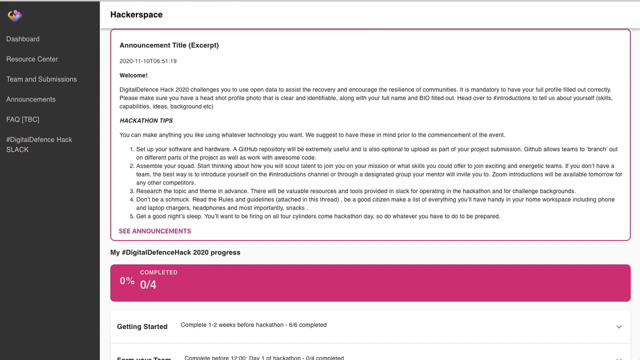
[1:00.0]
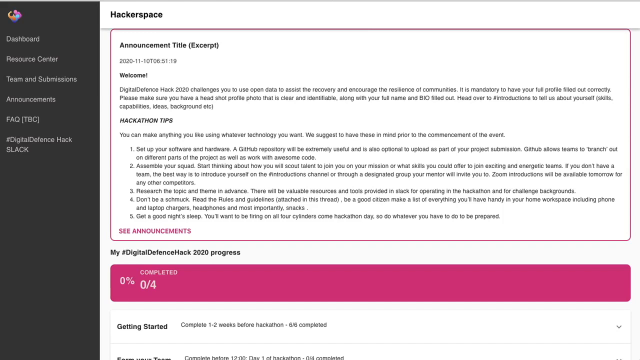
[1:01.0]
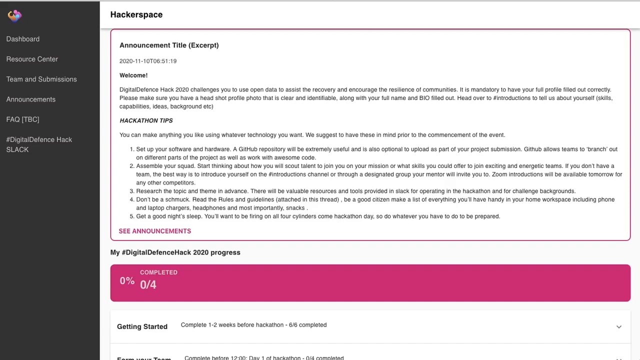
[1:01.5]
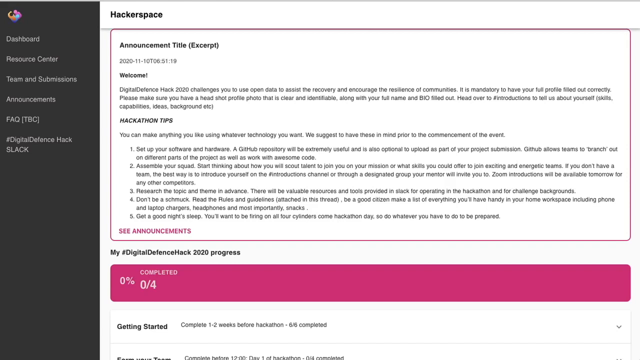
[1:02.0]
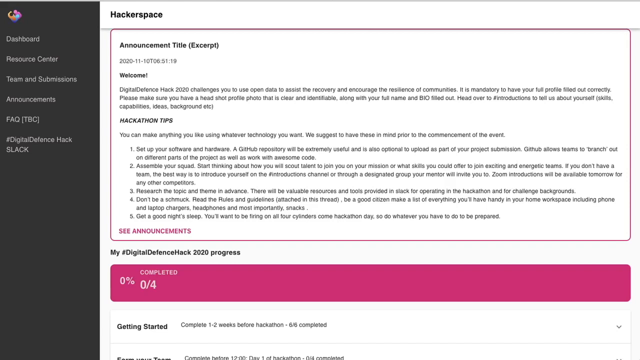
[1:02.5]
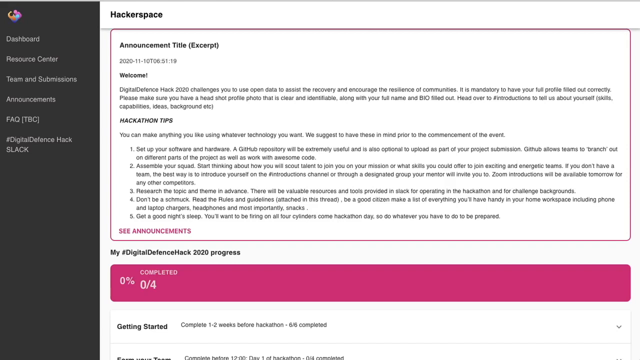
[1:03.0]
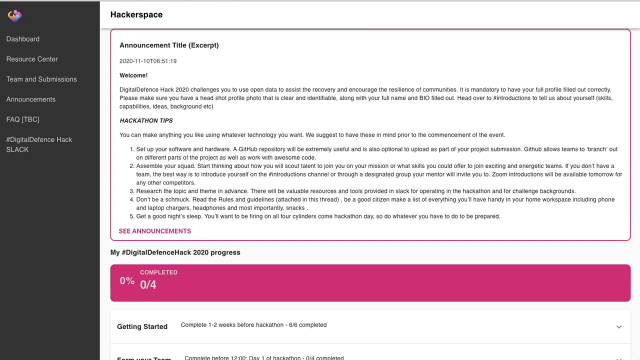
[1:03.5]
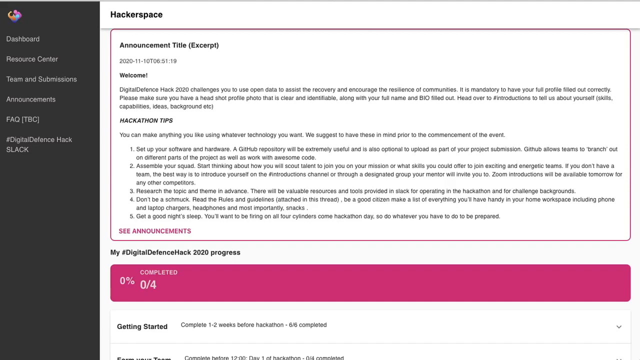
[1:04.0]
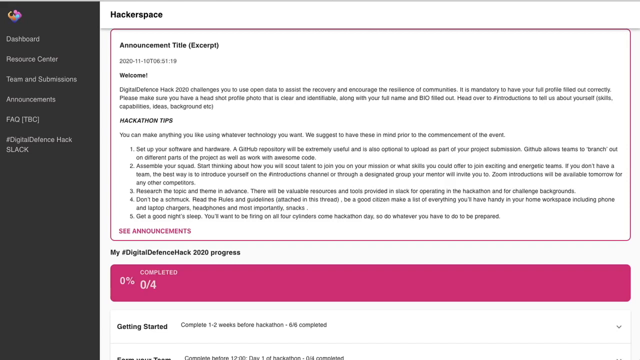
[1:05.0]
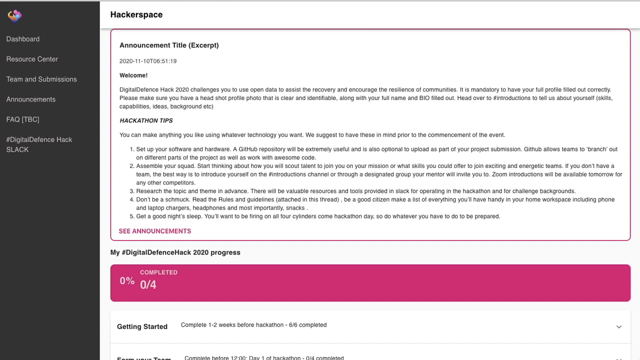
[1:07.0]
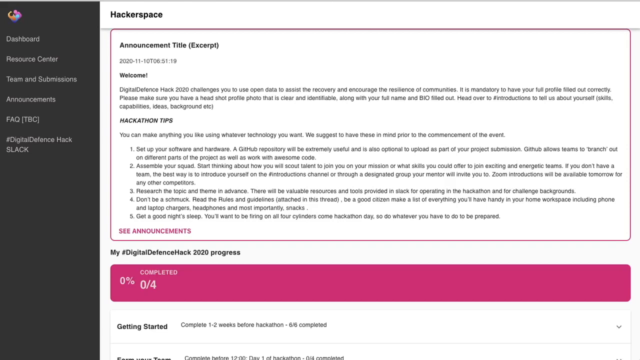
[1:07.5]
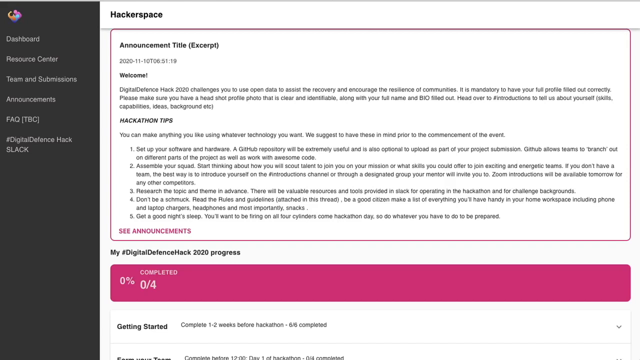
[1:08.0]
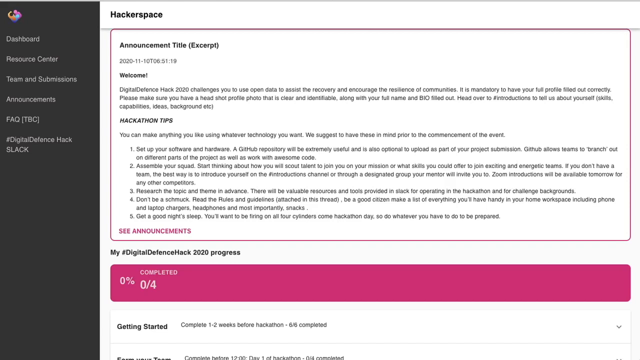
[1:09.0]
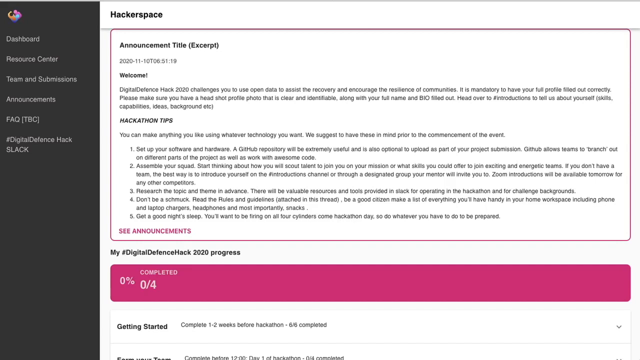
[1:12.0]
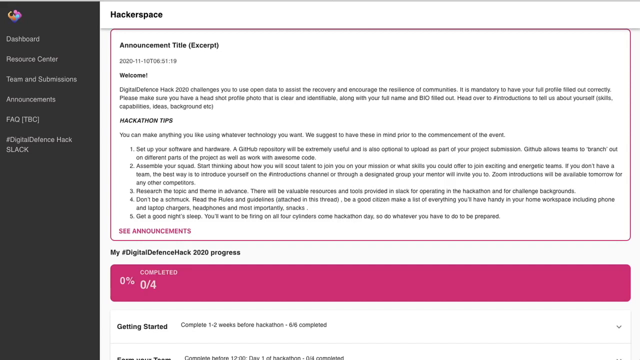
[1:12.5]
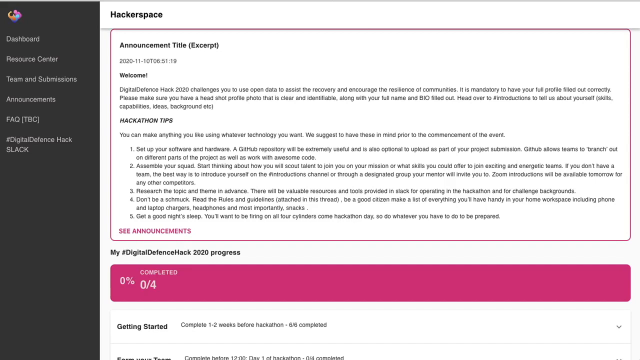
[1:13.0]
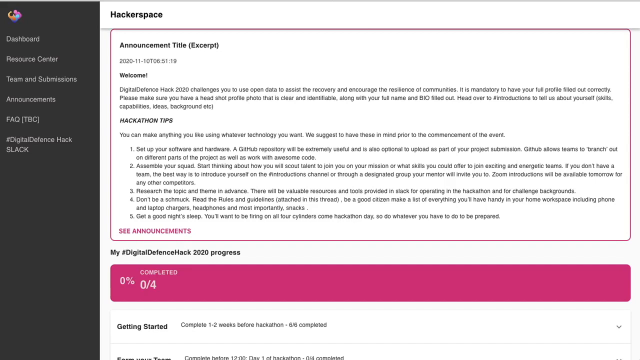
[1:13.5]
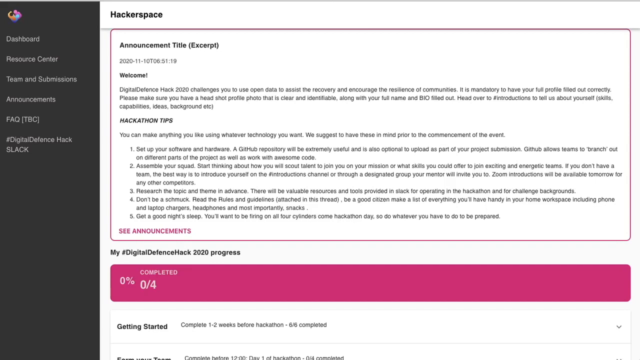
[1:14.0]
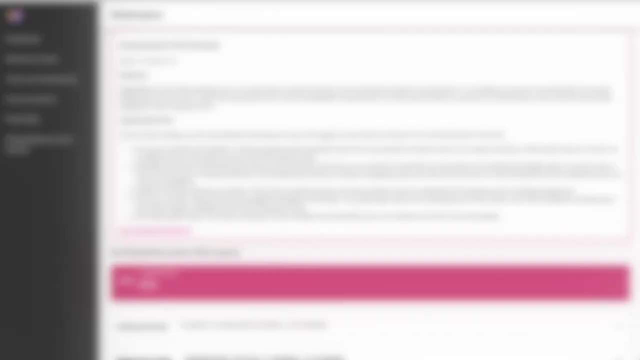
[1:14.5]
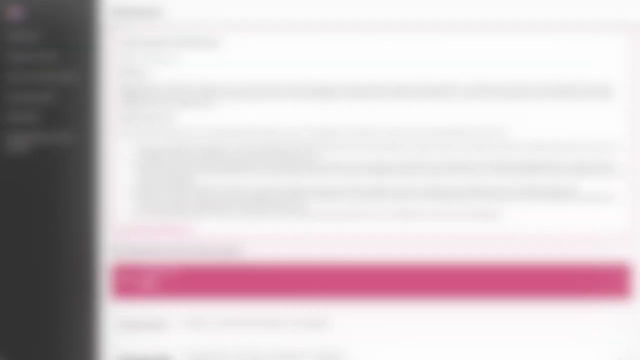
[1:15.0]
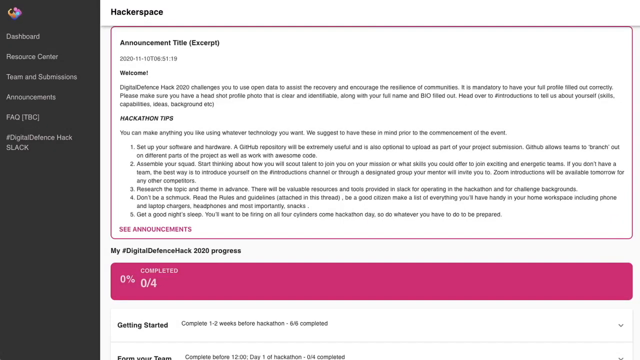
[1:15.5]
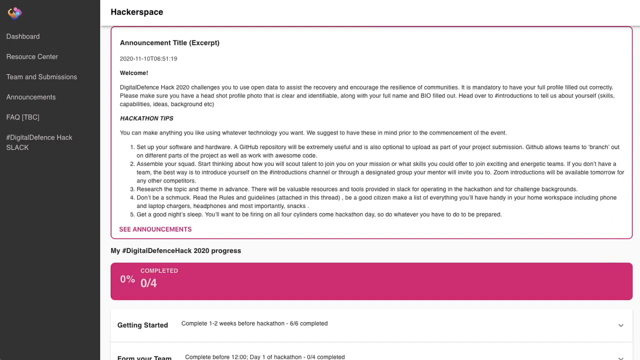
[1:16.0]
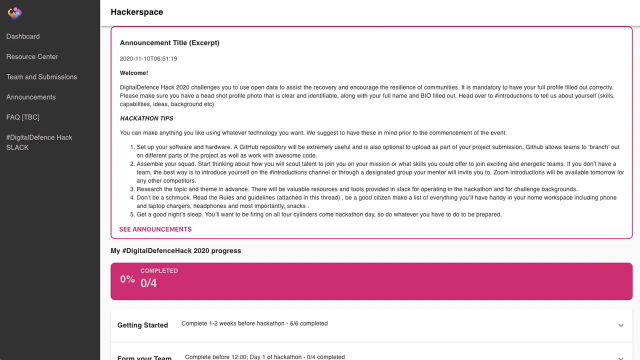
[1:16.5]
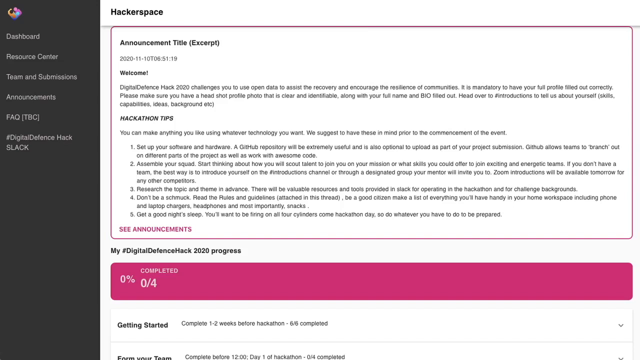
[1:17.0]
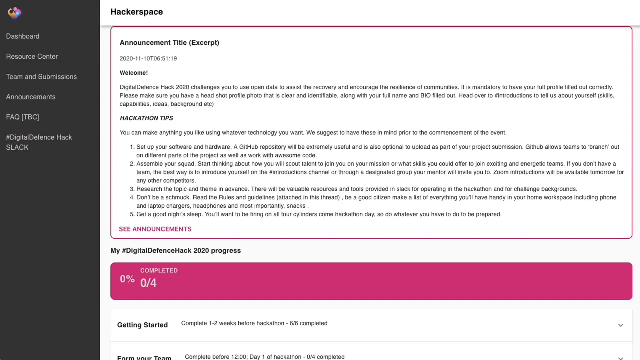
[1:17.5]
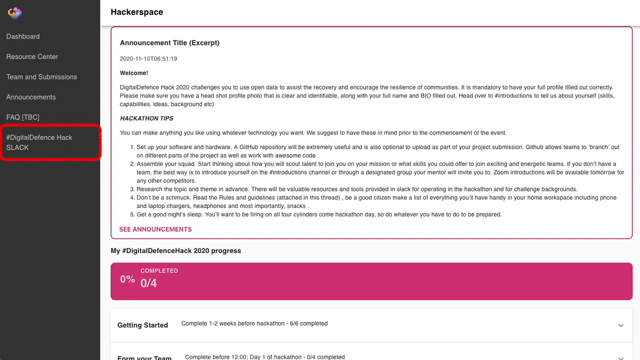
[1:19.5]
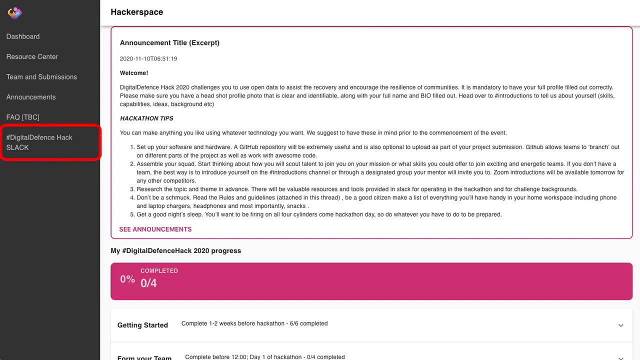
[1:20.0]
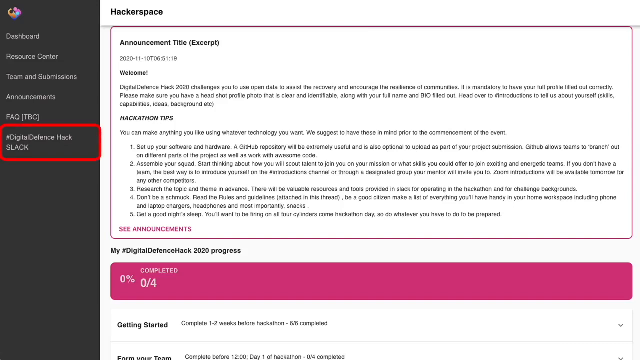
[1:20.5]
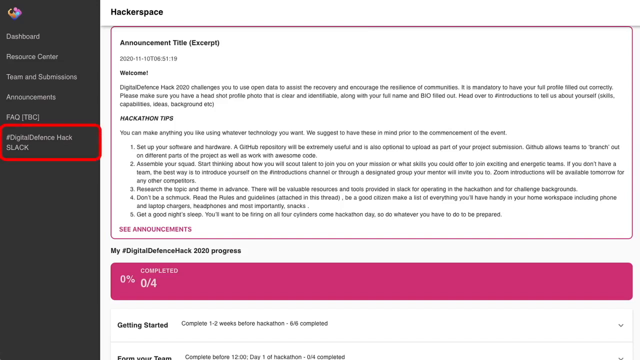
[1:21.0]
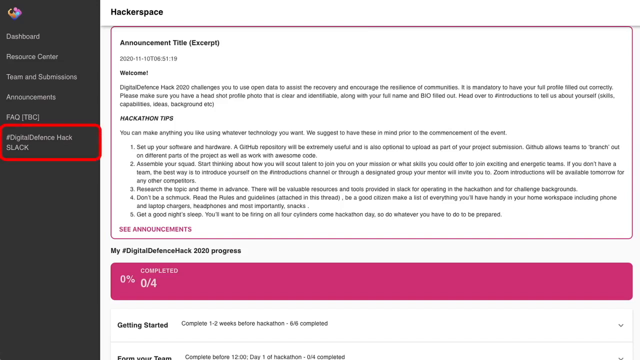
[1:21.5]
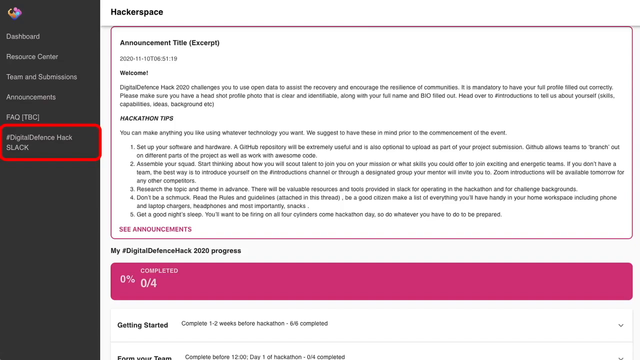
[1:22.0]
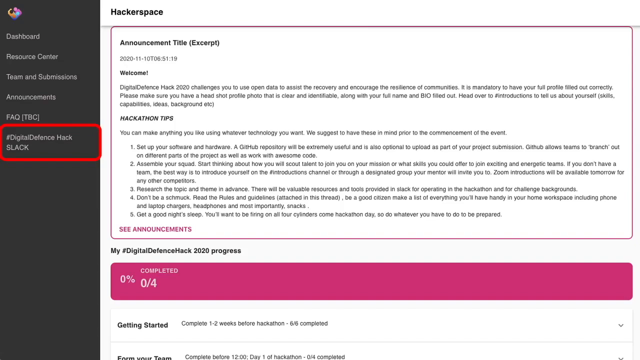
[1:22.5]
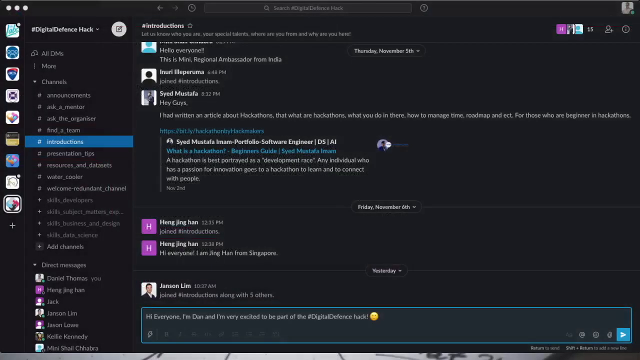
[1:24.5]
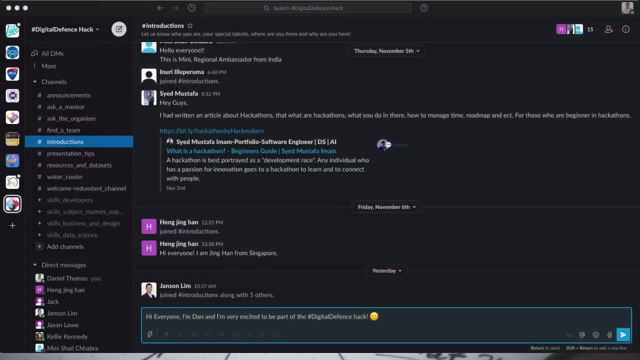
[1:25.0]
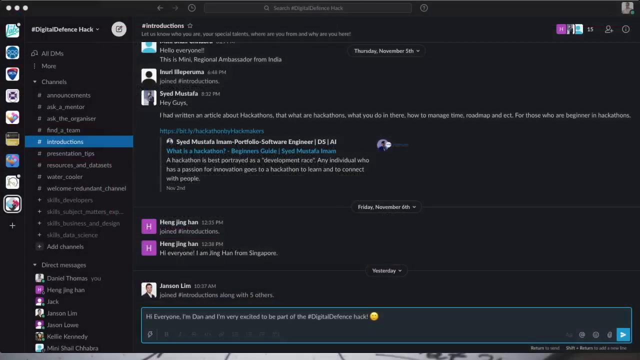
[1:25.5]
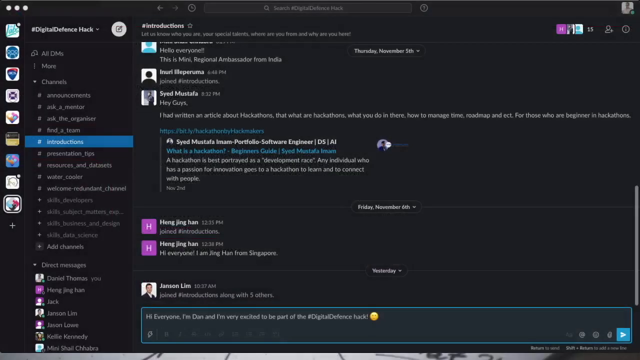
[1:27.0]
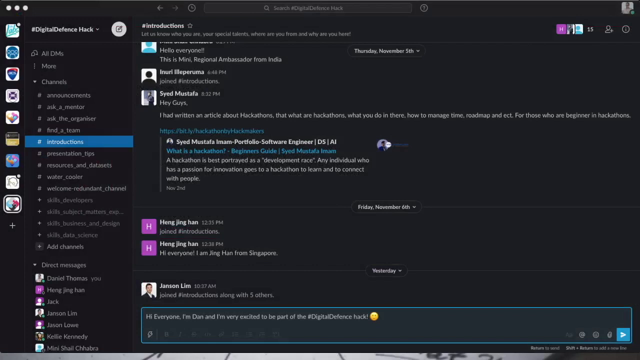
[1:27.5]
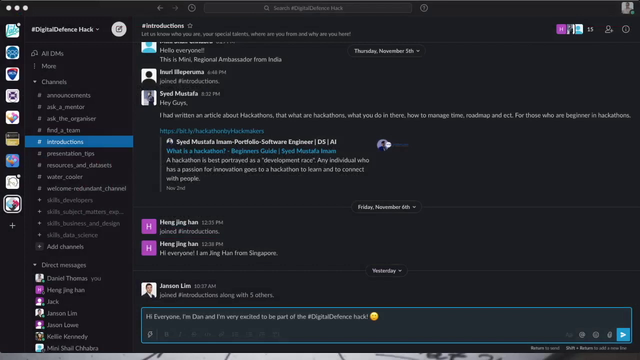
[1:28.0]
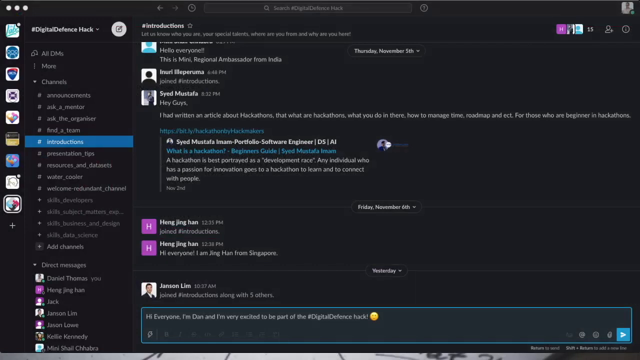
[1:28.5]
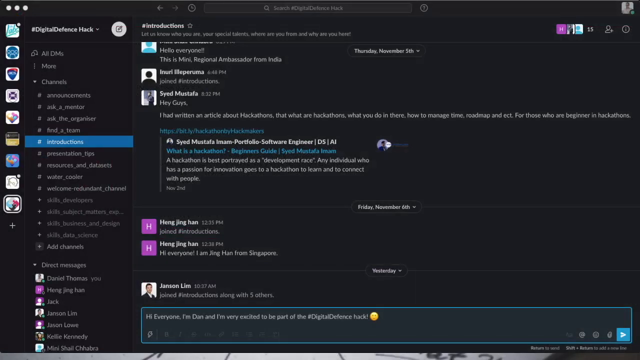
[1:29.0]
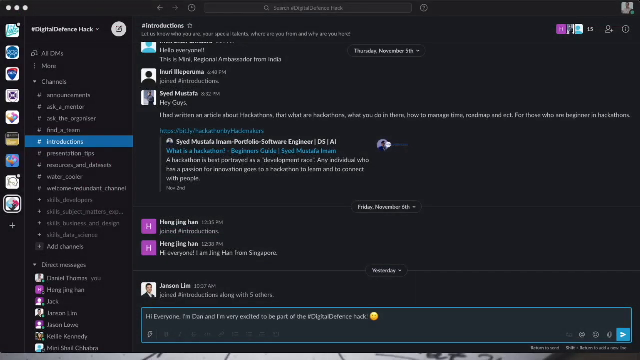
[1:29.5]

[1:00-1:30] The Hacker Space page shows "Announcement Title Accept," followed by a welcome note reading "Digital Defense Hack 2020 challenges you to use open data to assist the recovery and encourage the resistance of communities." At the bottom, hackathon tips are displayed one after another, introduced by "you can make anything you like using whatever technology you want. We suggest to have these in mind prior to the commencement of the event." The first tip reads "set up your software and hardware," the second "assemble your squad," the third "research the topic and theme in advance," the fourth "don't be a schmuck, read the rules and guidelines. Attachment in this thread," and the last "get a good night's sleep." A button reads "see announcement," and below it a progress bar reads "0% completed, 0/4." The user then clicks on the left side, where a site menu lists dashboard, resource center, terms and submission, announcement, FAQ, and digital defense hack and slack. The user clicks the last item, "digital defense hack and slack."